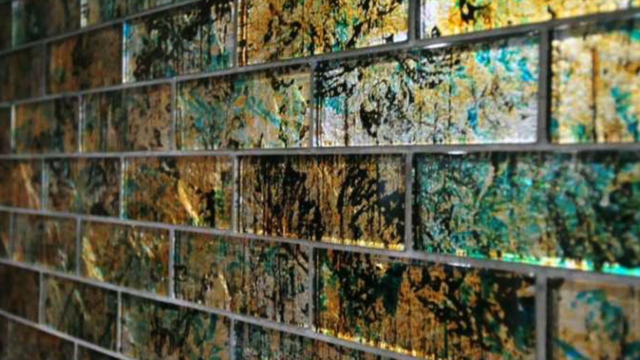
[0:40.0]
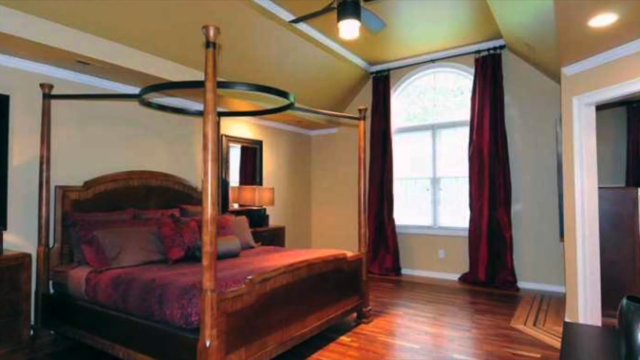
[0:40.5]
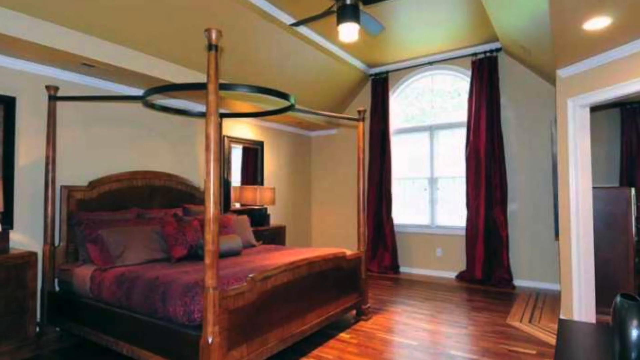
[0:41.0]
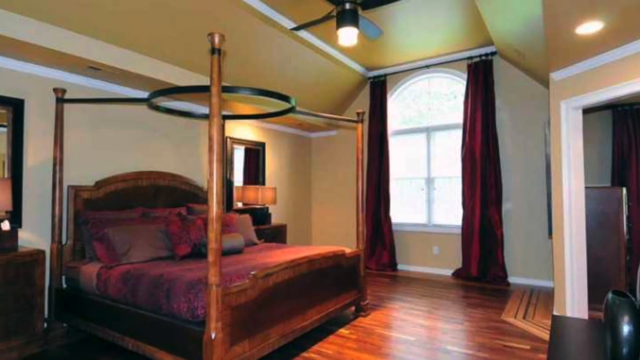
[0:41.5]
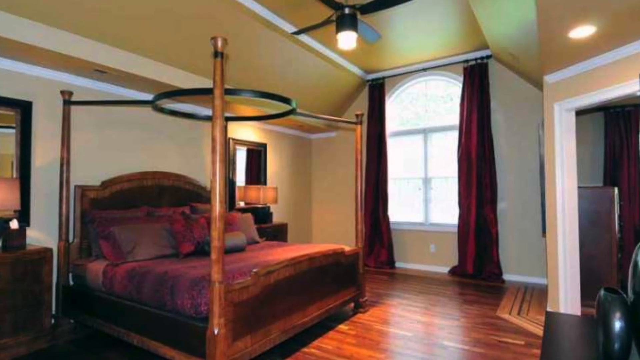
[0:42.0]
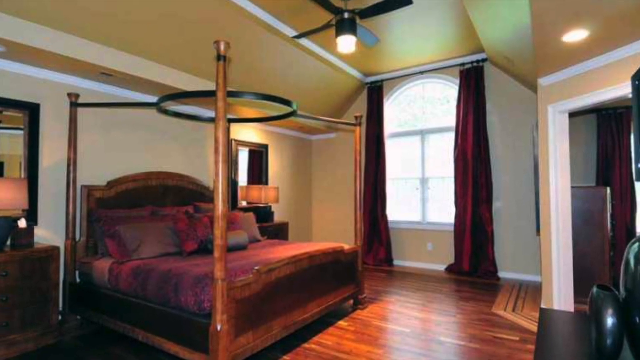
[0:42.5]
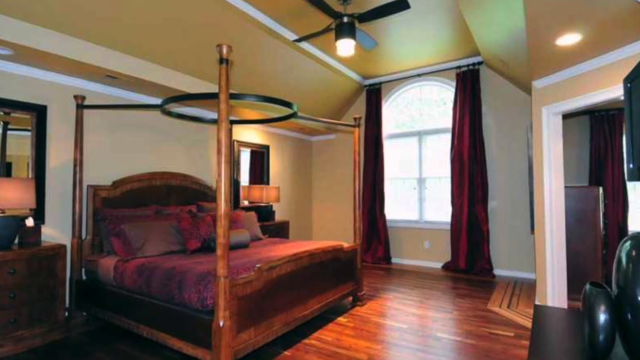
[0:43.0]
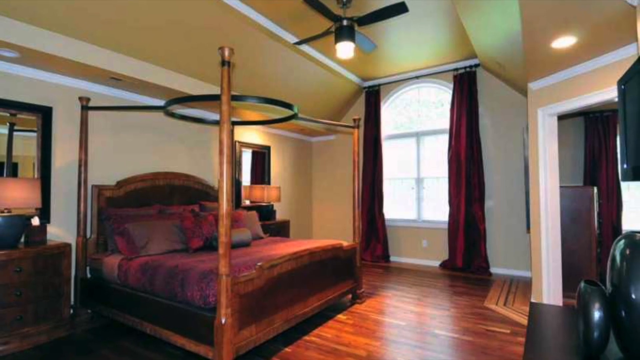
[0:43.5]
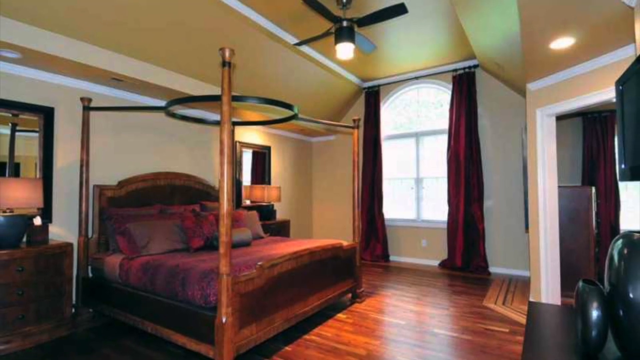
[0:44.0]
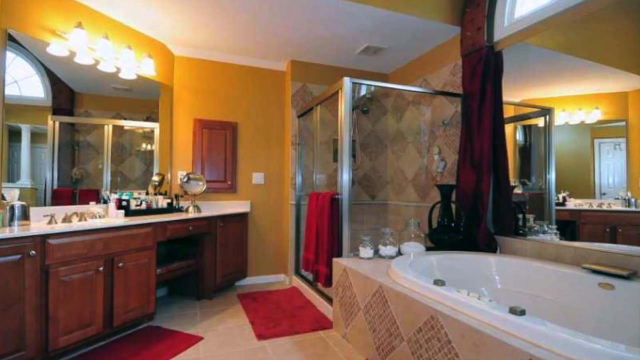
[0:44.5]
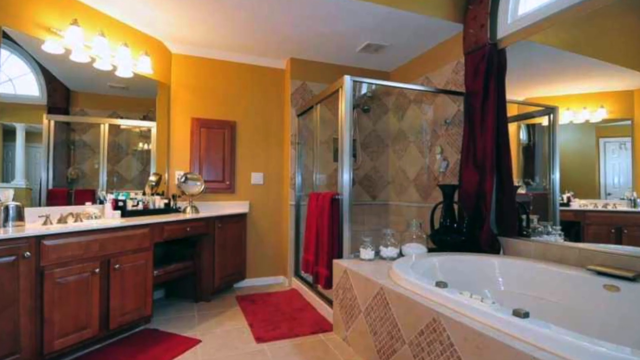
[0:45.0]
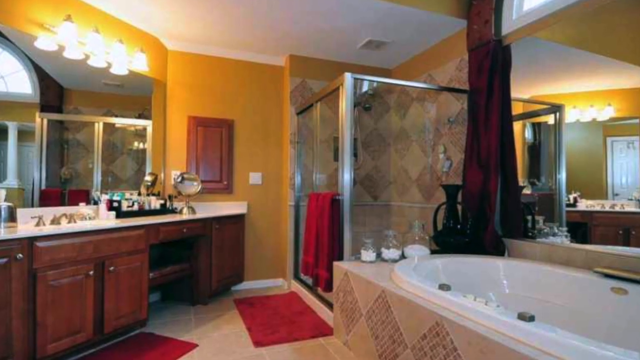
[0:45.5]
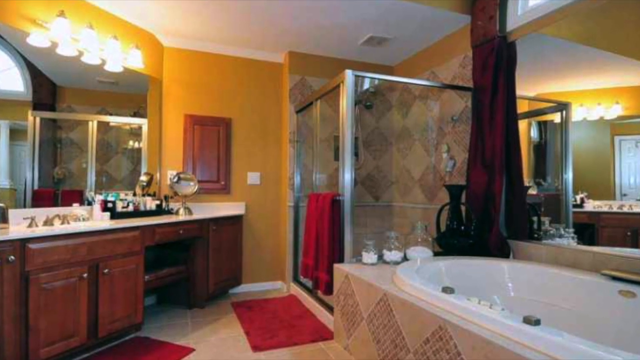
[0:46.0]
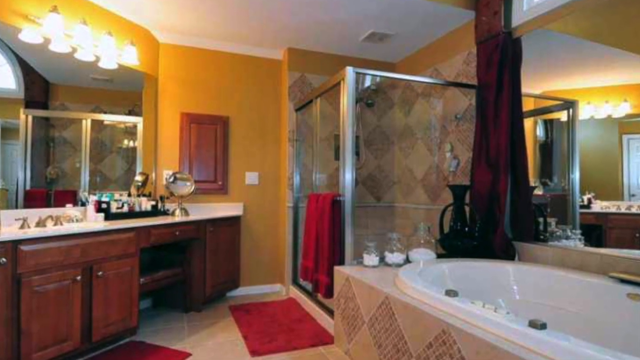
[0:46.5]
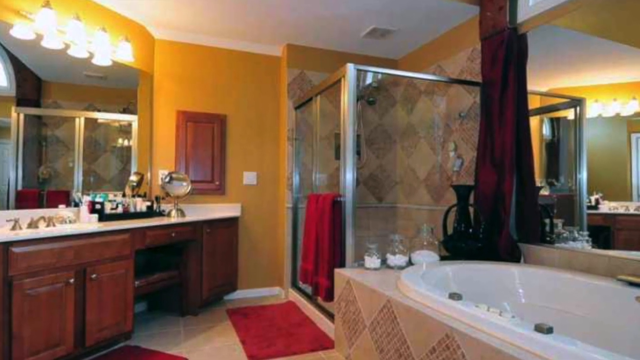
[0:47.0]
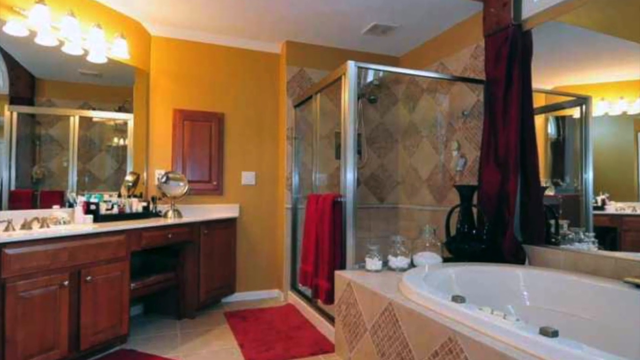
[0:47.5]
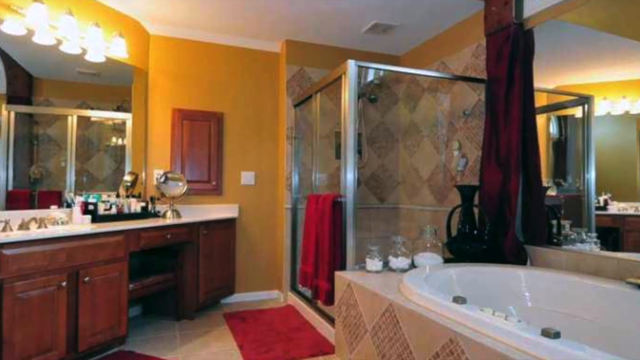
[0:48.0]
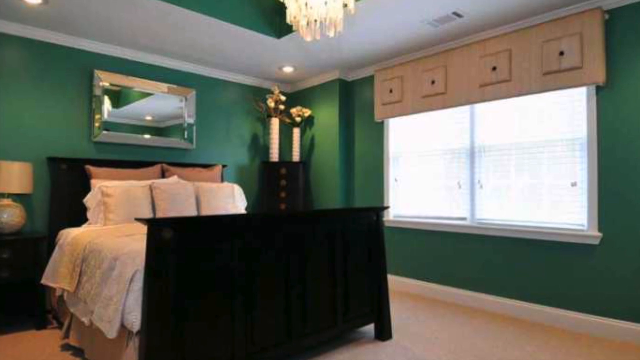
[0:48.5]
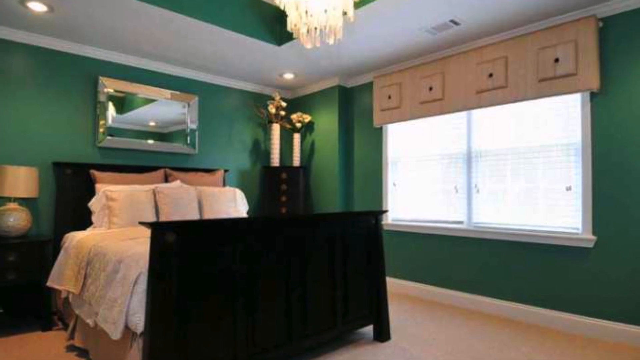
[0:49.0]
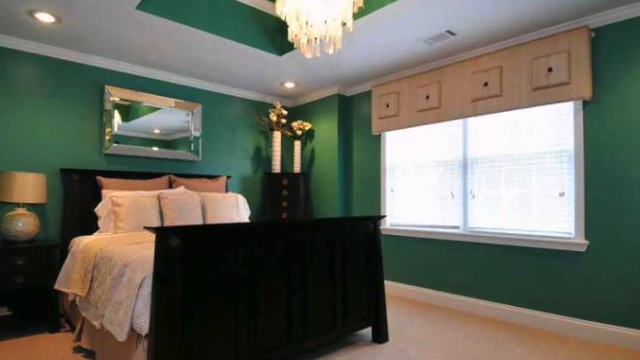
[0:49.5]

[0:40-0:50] A bedroom has a bed on a four-pillar post with purple bedding and purple pillows. There are purple curtains next to an arch-shaped window and a fan on the ceiling. A bathroom follows, with a large glass-sided shower and a bathtub next to the shower; on the opposite wall there are cupboards below a sink and mirror. Another bedroom is then shown, with green walls, a bed with white bedding, and a chandelier.